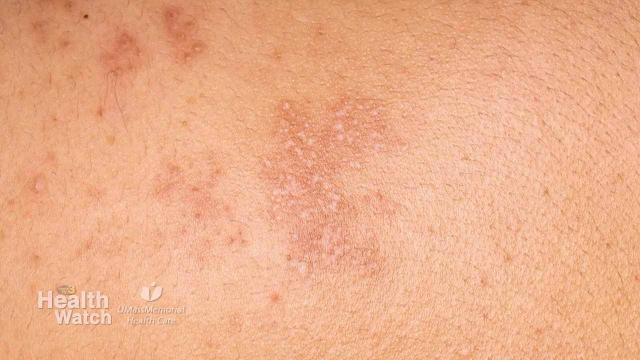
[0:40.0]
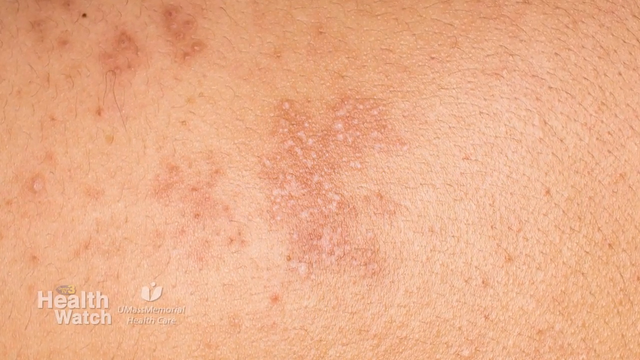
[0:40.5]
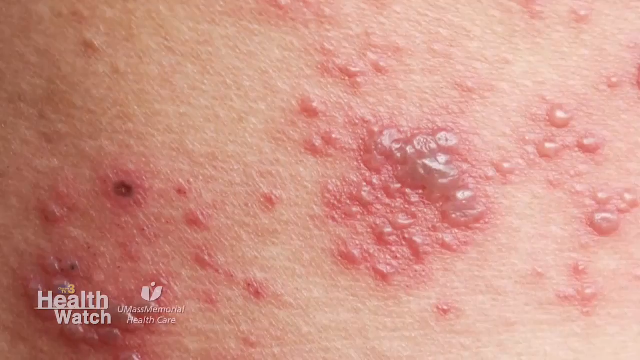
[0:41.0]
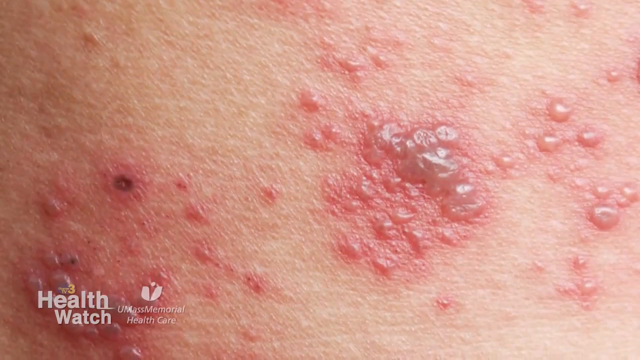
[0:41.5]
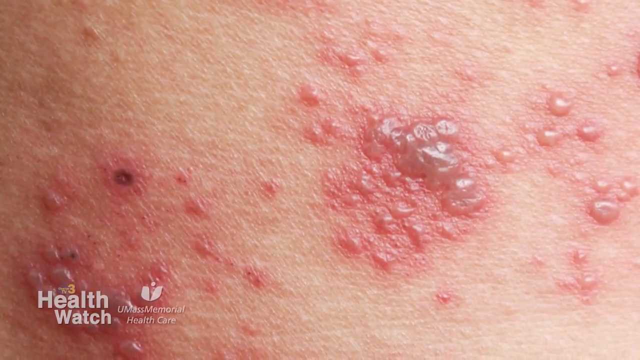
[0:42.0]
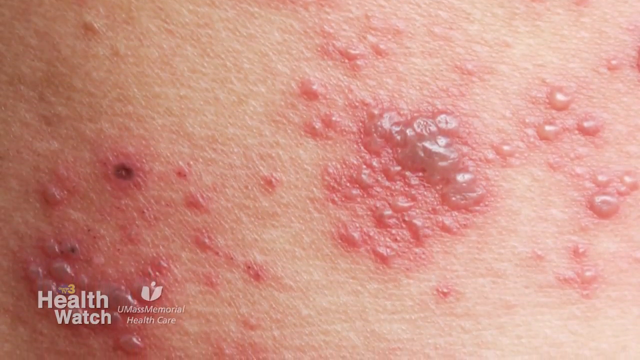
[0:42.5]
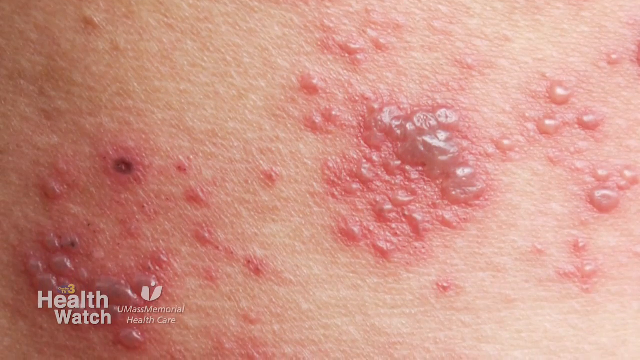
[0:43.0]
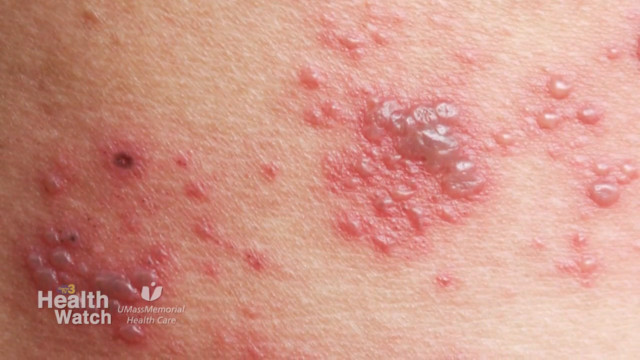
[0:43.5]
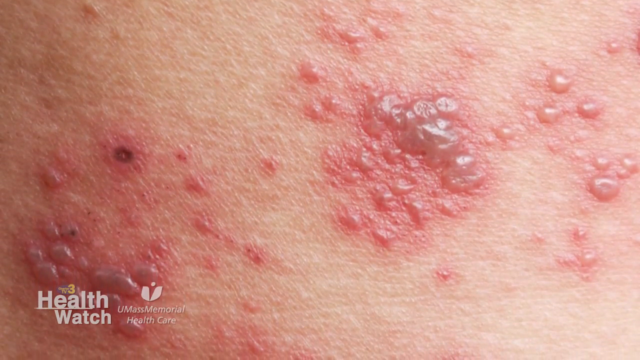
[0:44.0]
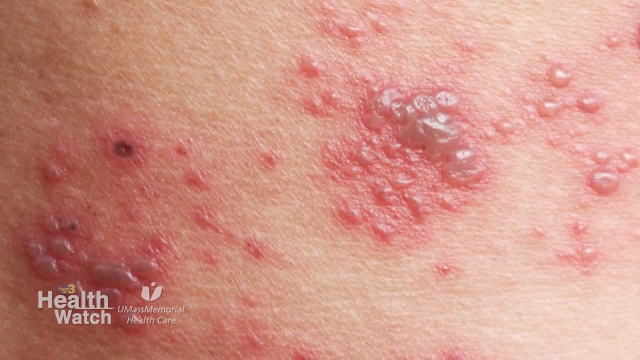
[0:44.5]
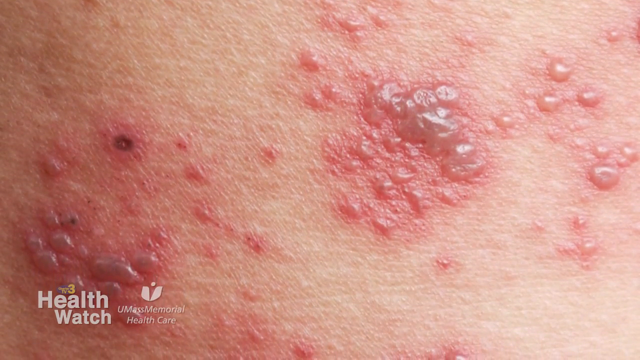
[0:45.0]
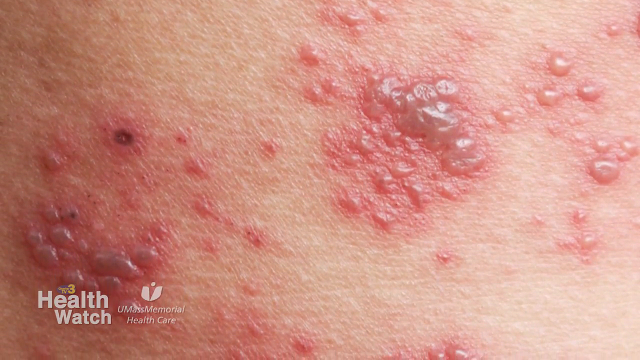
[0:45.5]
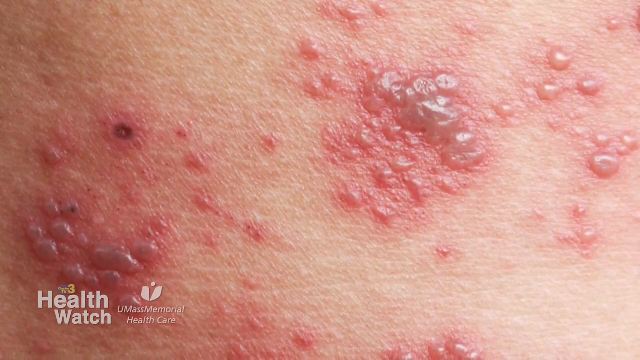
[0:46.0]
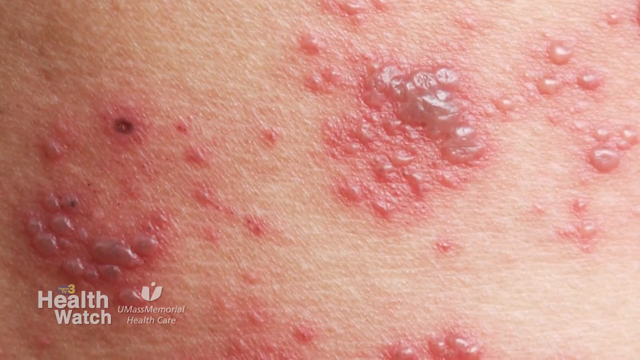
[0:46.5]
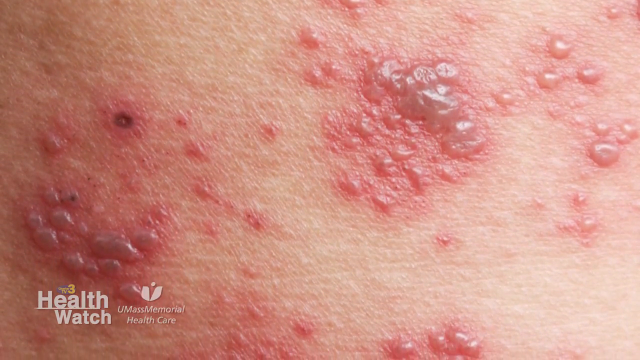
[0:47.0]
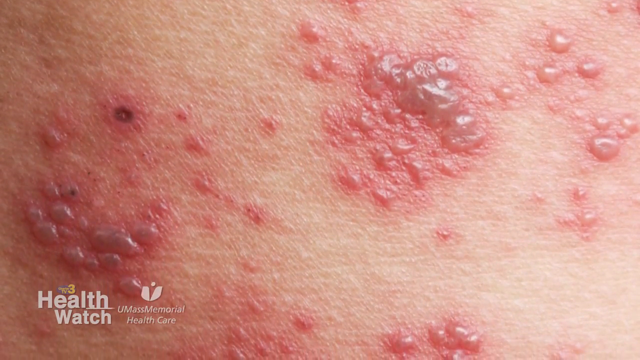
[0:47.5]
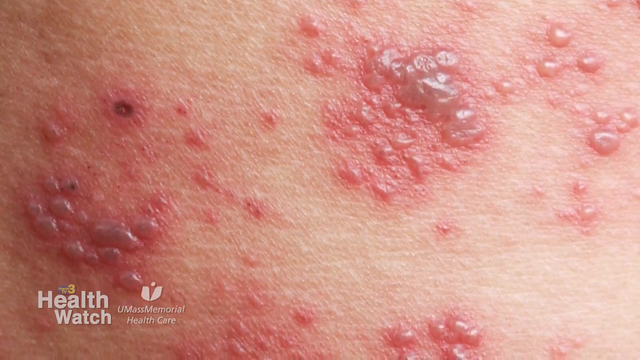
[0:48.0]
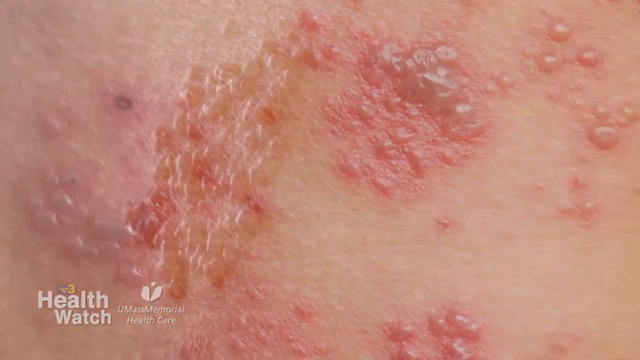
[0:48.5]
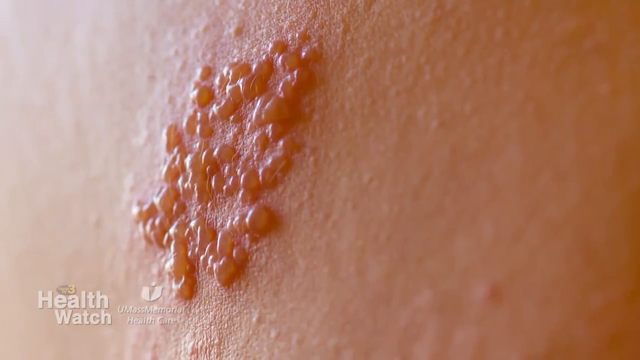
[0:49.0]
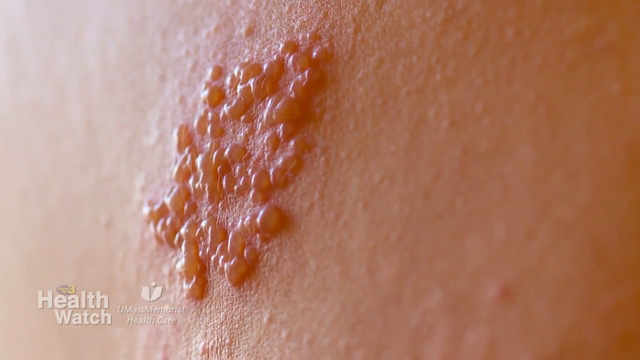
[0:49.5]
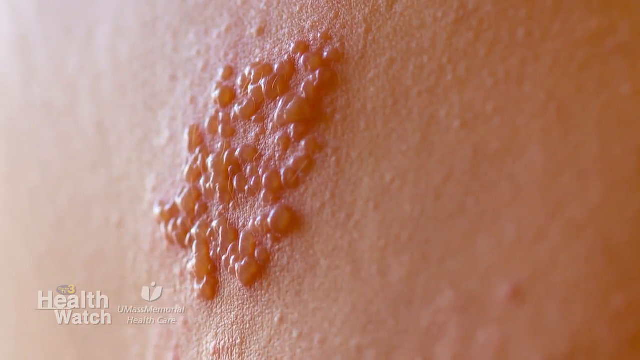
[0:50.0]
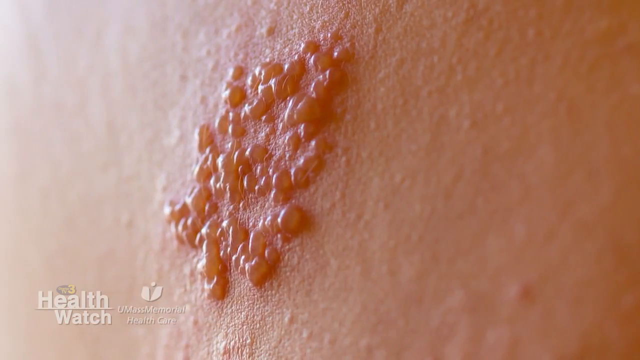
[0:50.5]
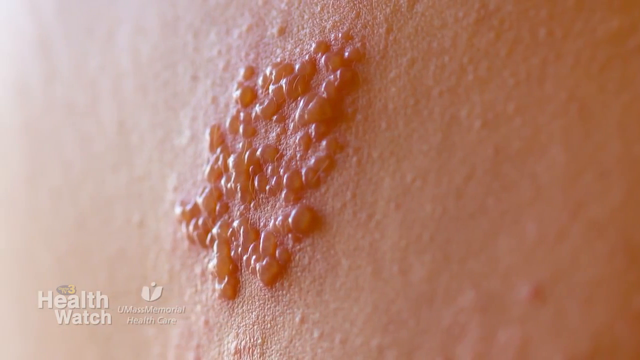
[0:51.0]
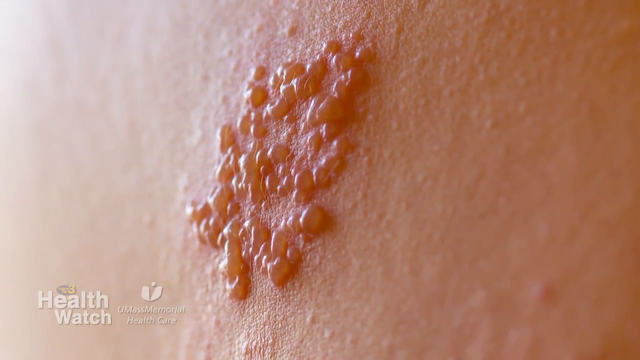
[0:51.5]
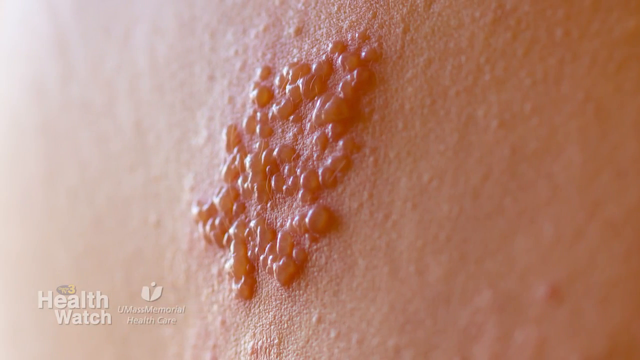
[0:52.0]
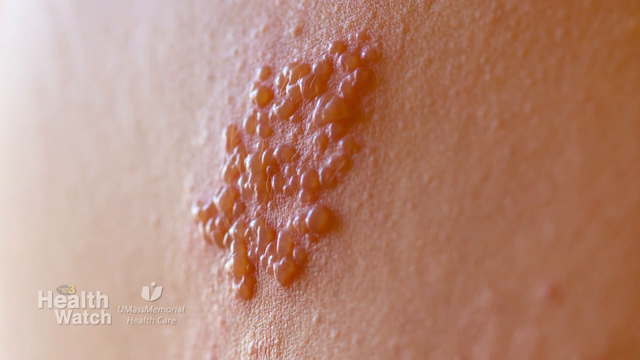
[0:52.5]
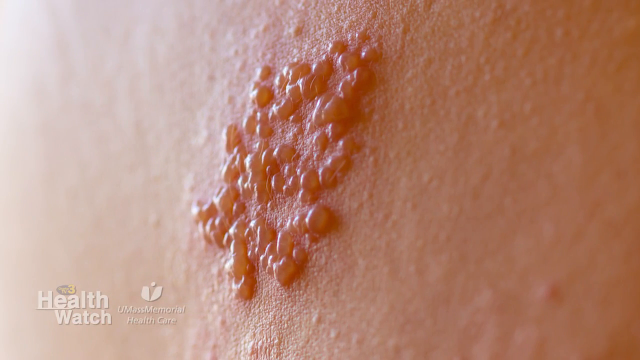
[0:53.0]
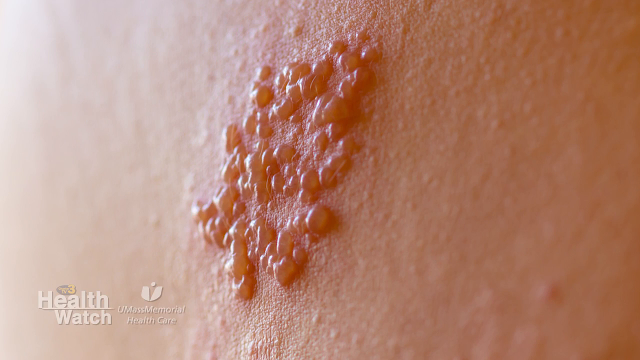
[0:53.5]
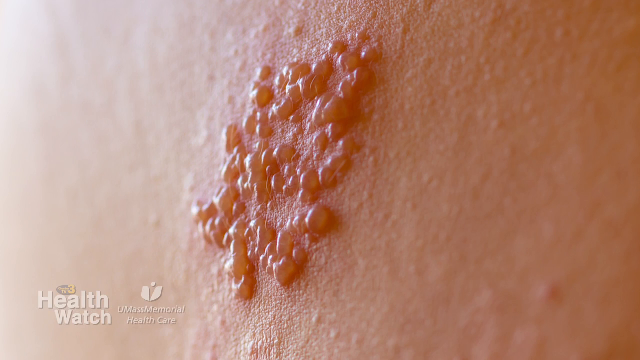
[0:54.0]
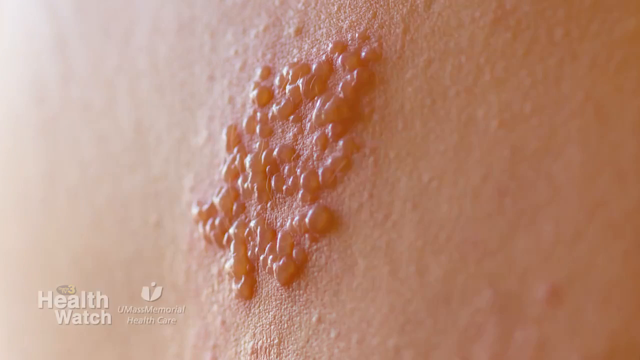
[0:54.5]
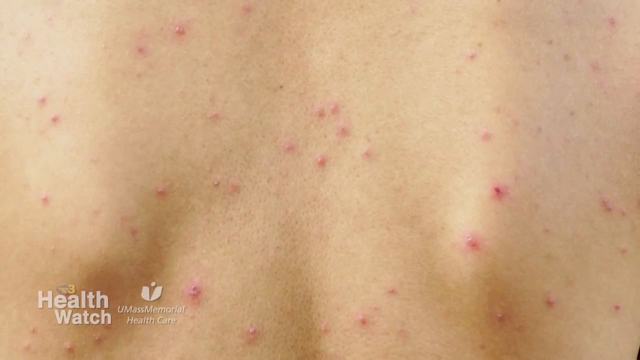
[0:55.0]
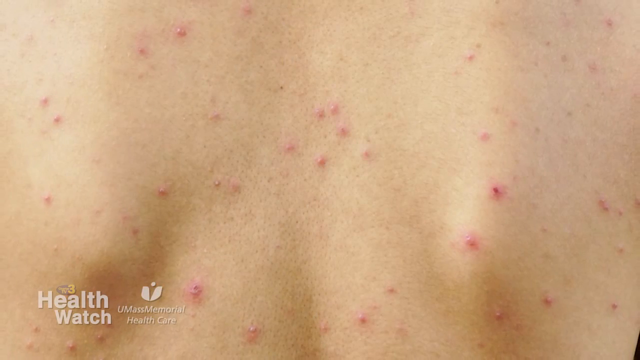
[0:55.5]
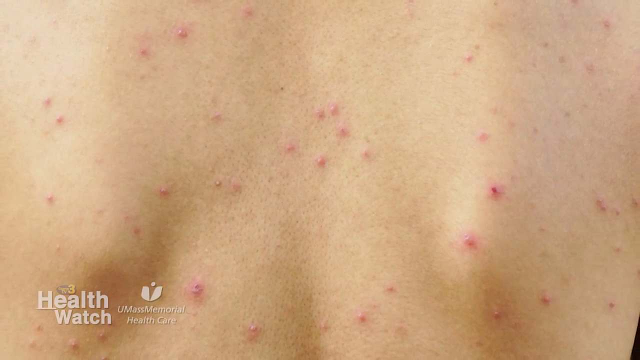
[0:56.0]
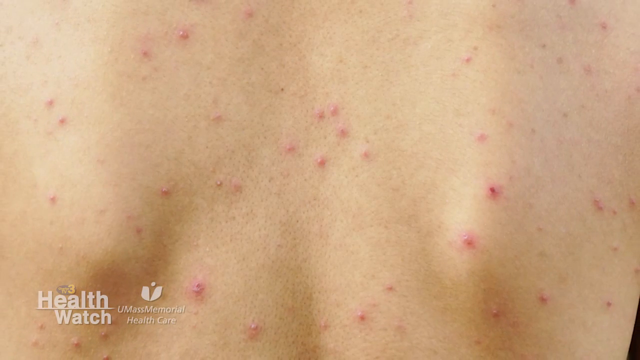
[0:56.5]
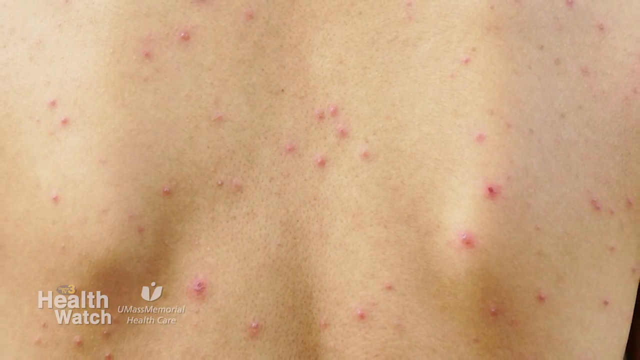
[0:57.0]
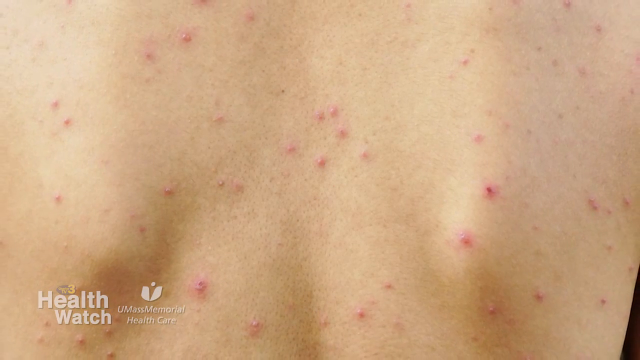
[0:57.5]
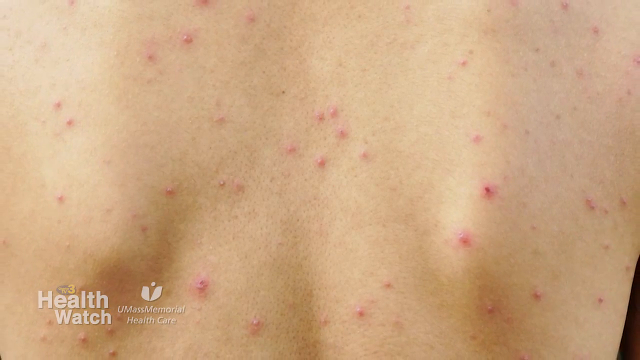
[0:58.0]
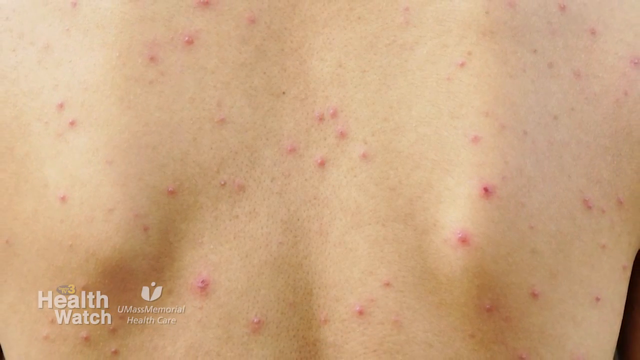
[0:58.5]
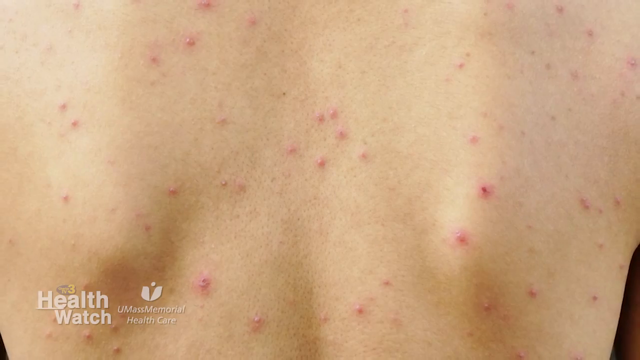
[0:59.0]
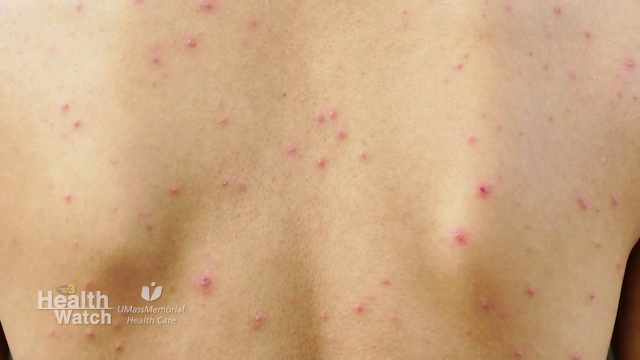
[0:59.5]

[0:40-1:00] An up-close picture shows someone's rash made of bumps, some bigger than others; the bigger ones look like the skin is pretty thin and appear filled with fluid. The next picture is an up-close of these bumps, which look pretty raised, all appear to have fluid in them, and are an orange-like color. The next picture shows what looks like pimples on the back. These look pretty flat and not easy to pop, but they are still pink and red, and some look like they have been scratched off. Although the picture is zoomed in, most of them appear to be on the back area. It looks like some kind of infection and appears contagious.